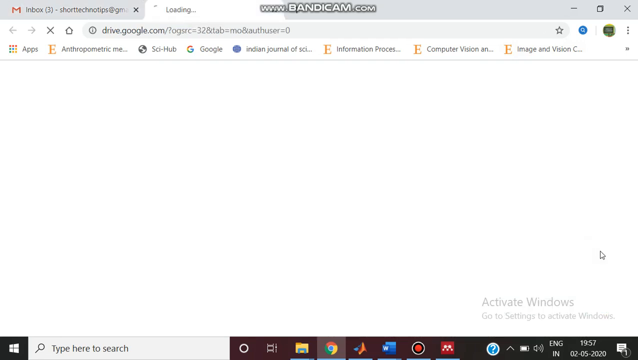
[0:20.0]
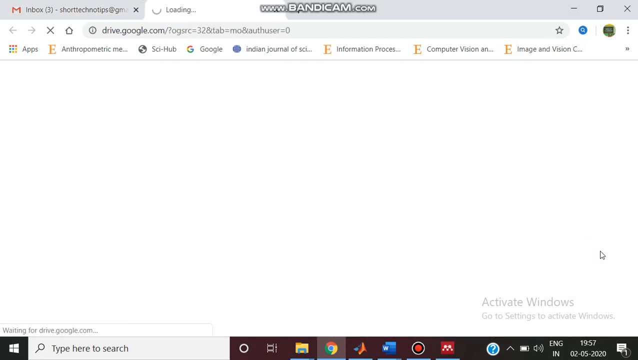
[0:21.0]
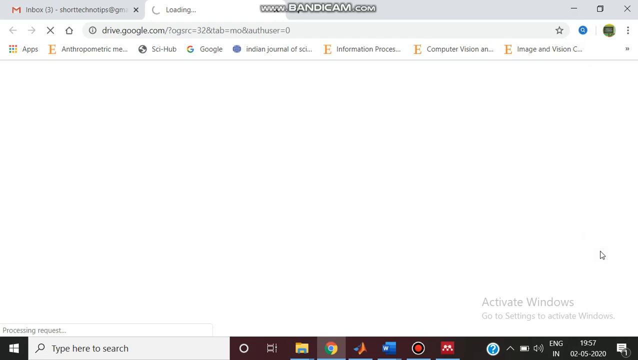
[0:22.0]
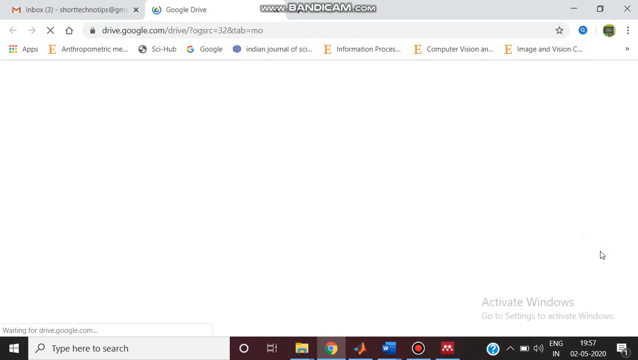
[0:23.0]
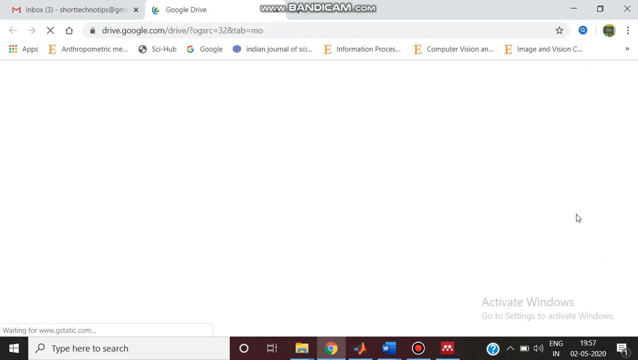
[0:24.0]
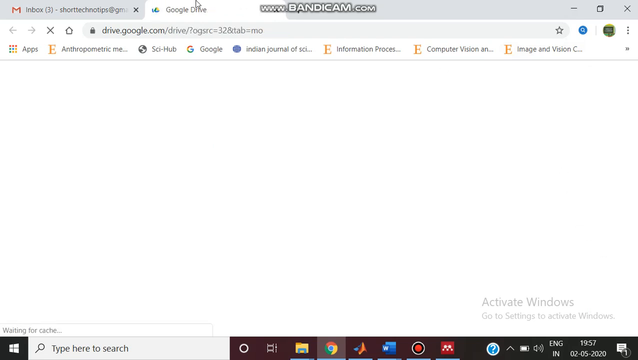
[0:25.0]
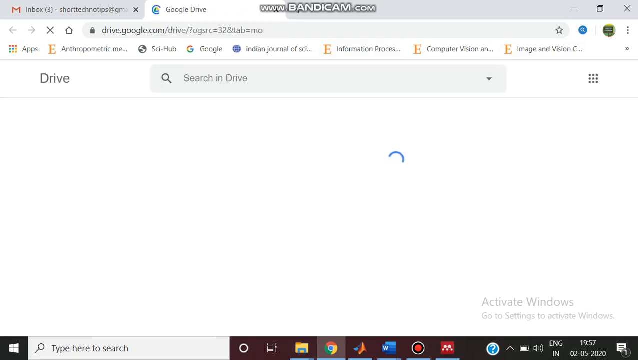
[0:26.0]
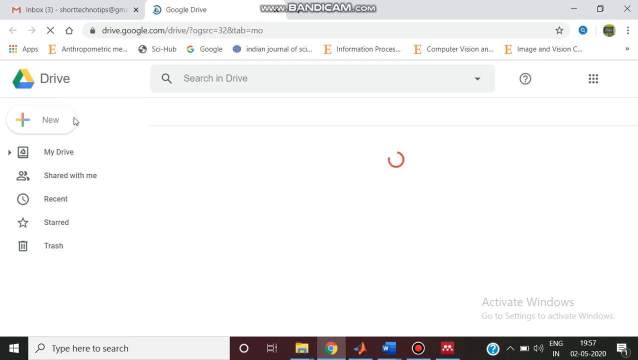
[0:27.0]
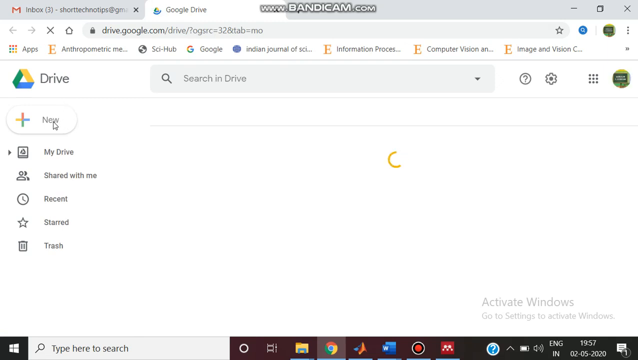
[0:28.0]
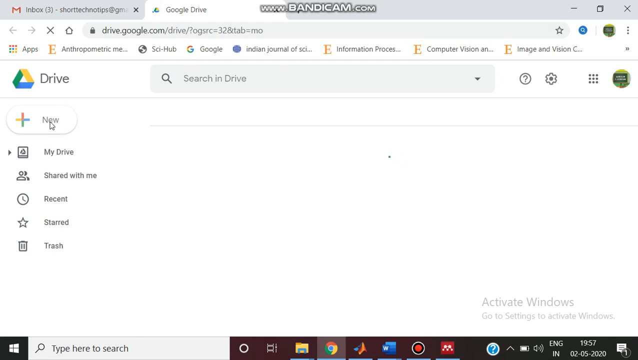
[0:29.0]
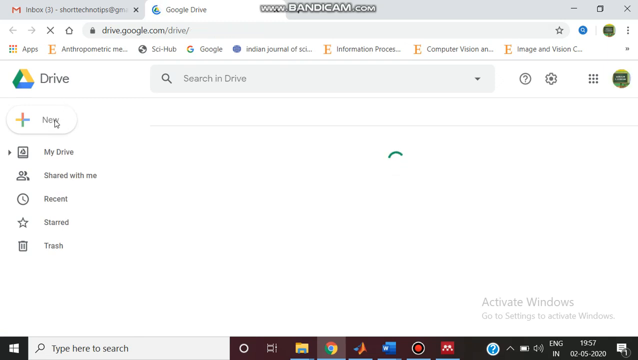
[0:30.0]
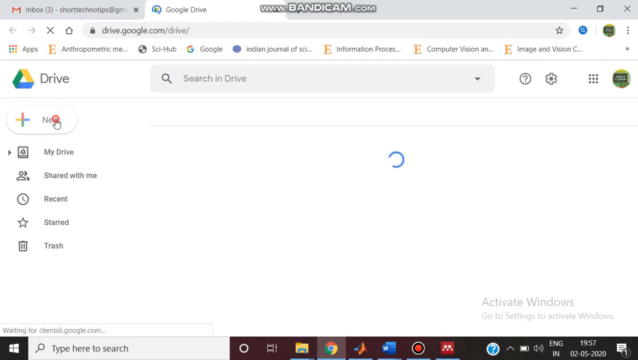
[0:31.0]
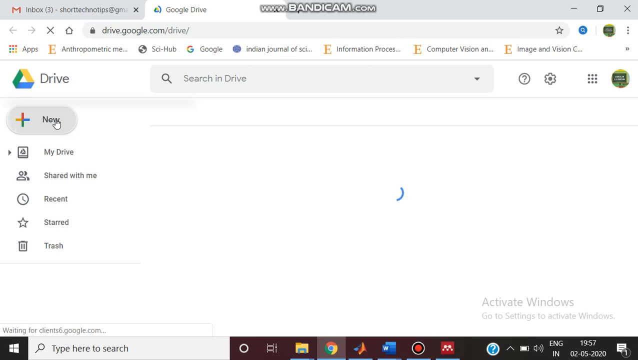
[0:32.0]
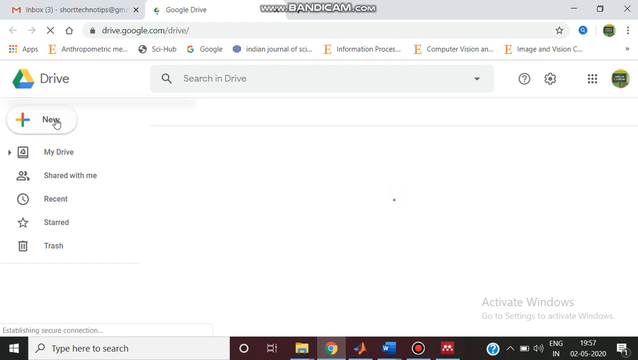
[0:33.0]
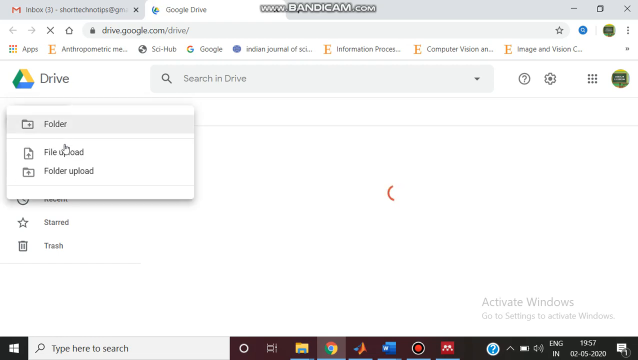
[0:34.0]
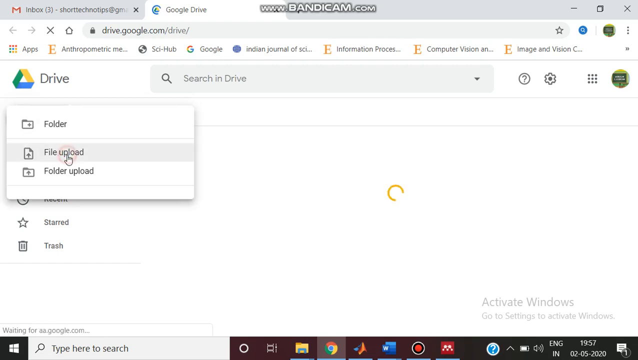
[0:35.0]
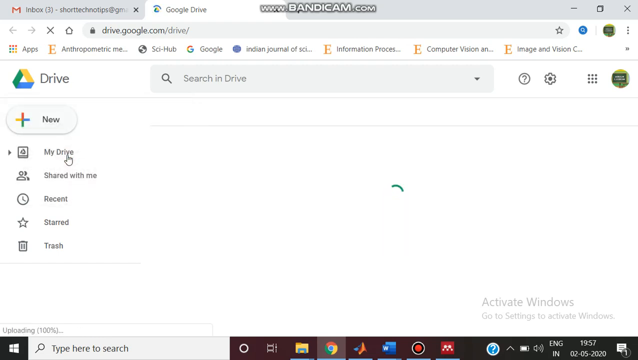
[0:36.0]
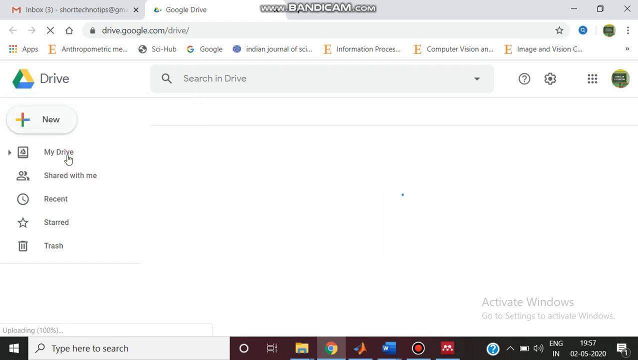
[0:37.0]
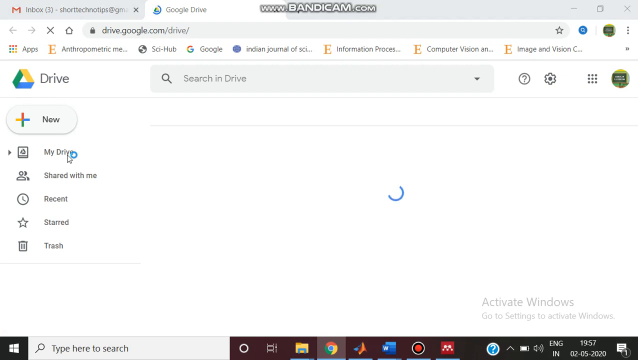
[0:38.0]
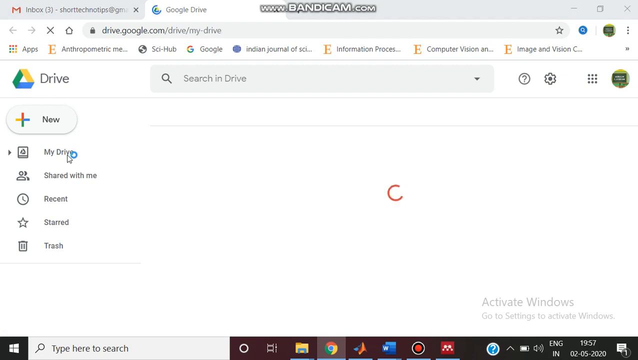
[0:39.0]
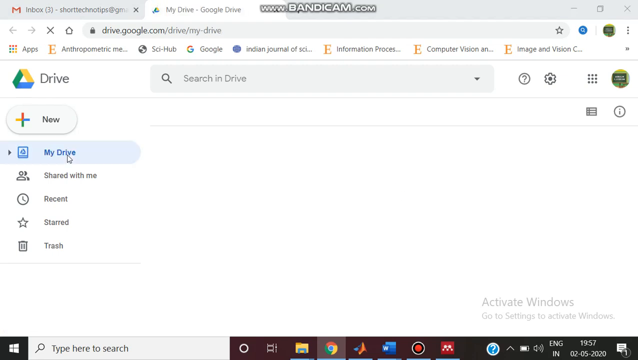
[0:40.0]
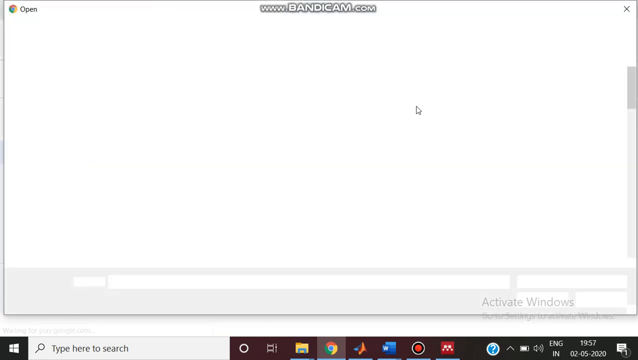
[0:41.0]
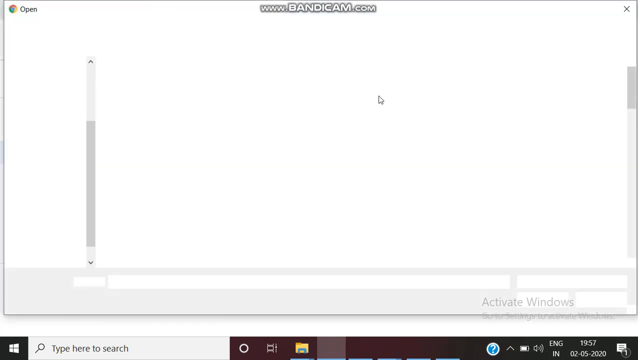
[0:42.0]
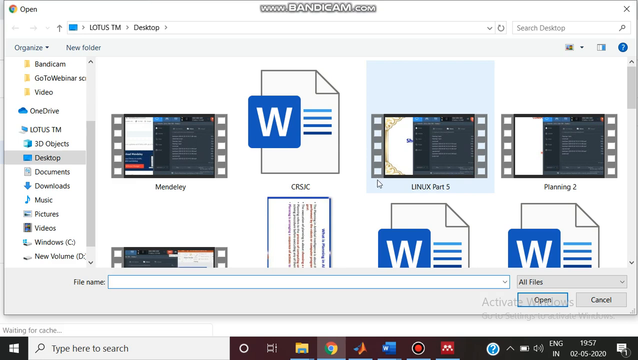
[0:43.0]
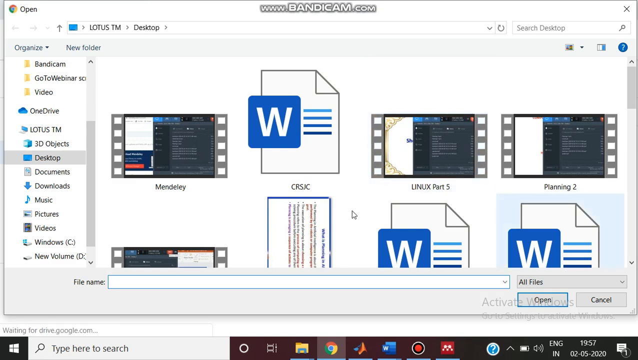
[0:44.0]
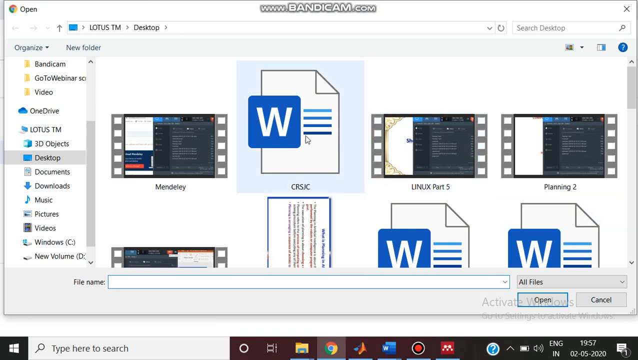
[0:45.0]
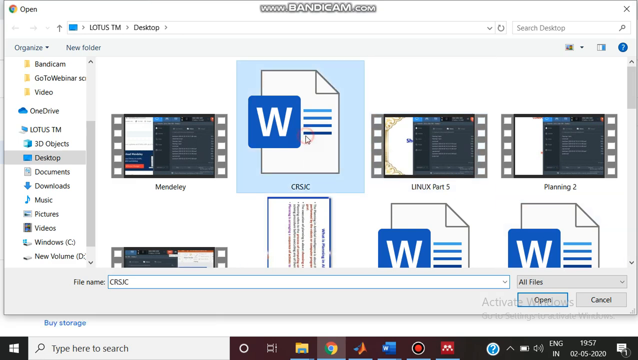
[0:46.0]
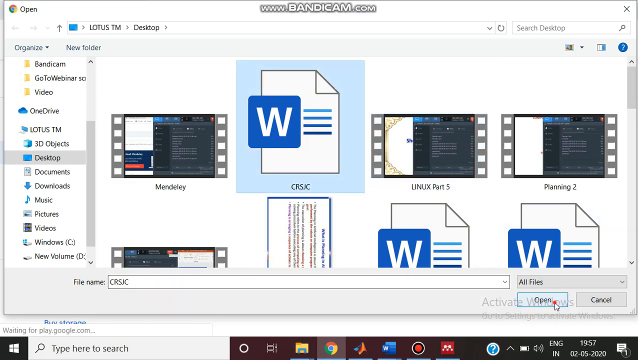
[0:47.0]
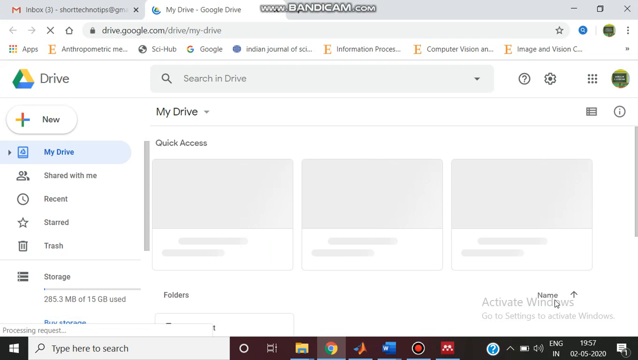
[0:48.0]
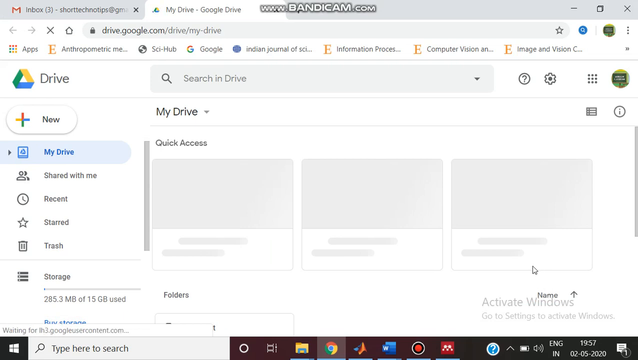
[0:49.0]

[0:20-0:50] Two Google Chrome tabs are open on a PC screen. One, which is not visible, is Gmail; the other is a new tab loading Google Drive. The address www.bandicam.com is at the top of the page. Once the Drive page loads, the person puts the cursor on New and clicks it, opening a drop-down box, and they click File Upload. Google Drive is still loading. When the window opens, it shows a Desktop folder. At the left are several tabs, including 3D objects, documents, download, pictures, videos and more; the desktop tab is selected. There are eight documents here: three Windows documents and five Linux documents. The person clicks on a Word document, and the page starts to load.